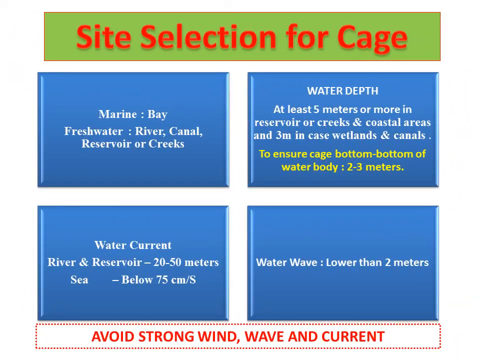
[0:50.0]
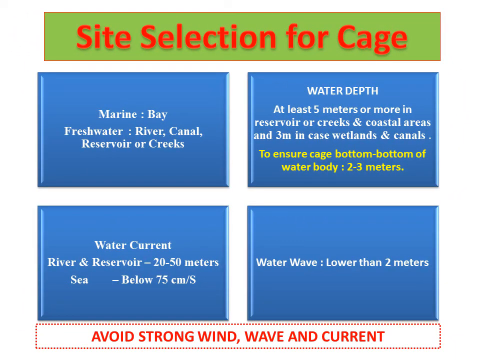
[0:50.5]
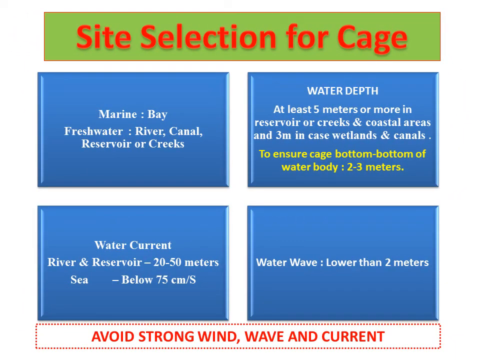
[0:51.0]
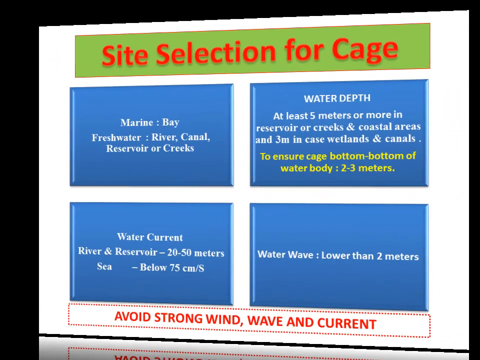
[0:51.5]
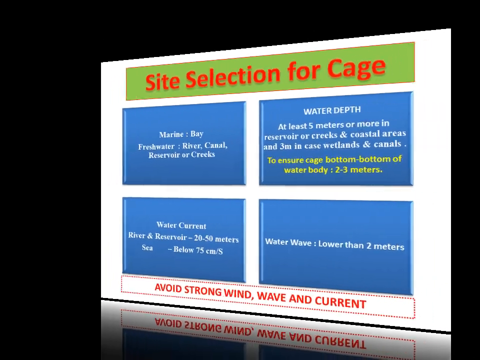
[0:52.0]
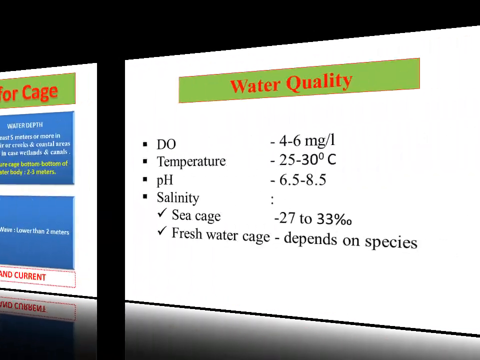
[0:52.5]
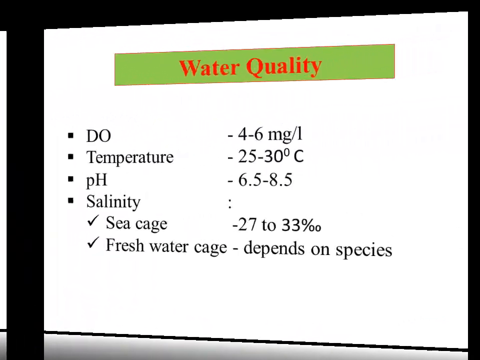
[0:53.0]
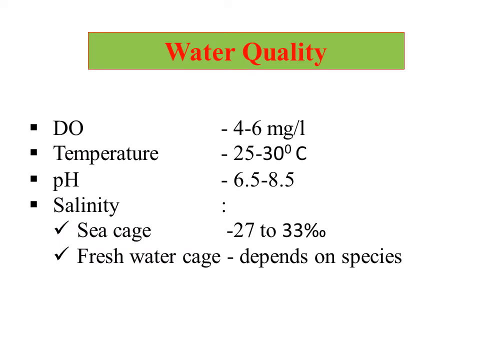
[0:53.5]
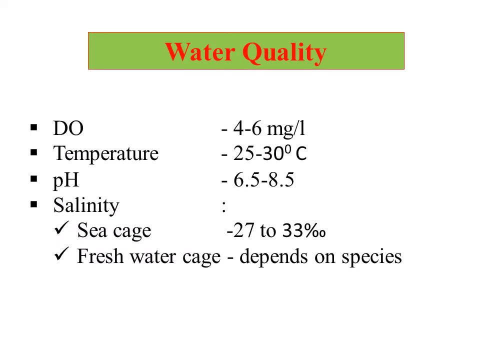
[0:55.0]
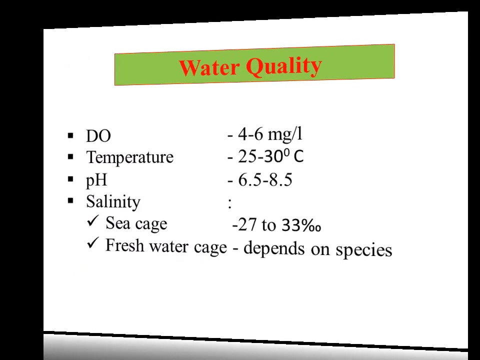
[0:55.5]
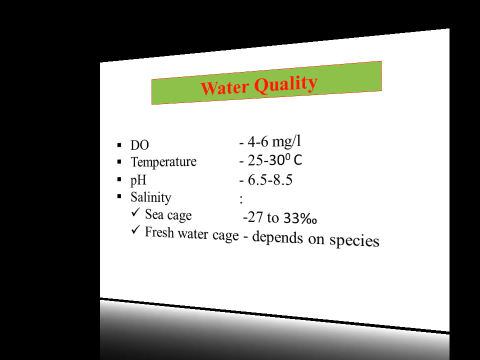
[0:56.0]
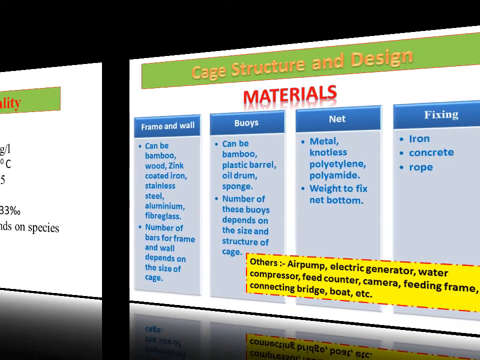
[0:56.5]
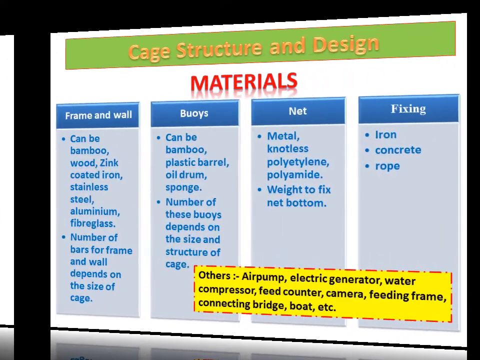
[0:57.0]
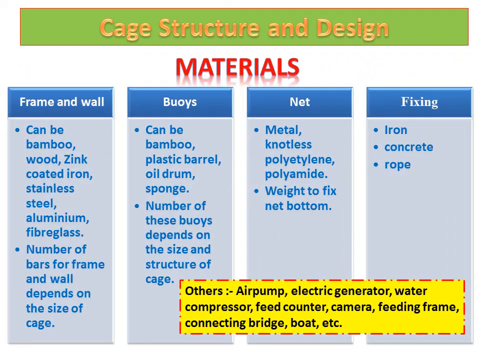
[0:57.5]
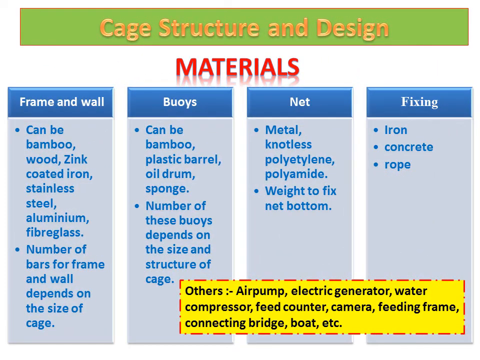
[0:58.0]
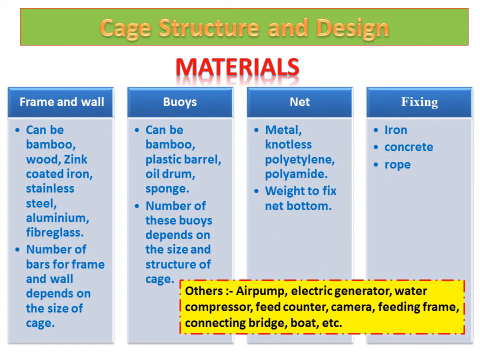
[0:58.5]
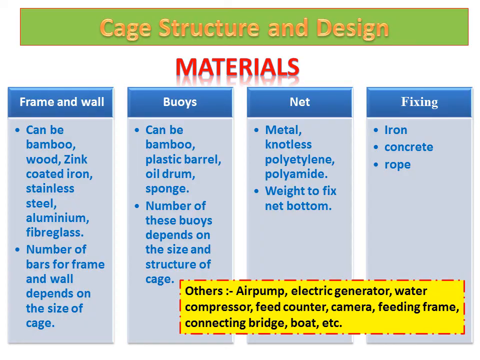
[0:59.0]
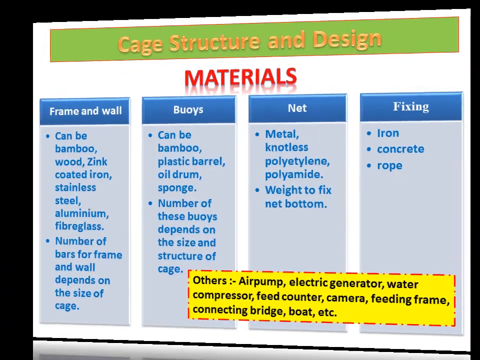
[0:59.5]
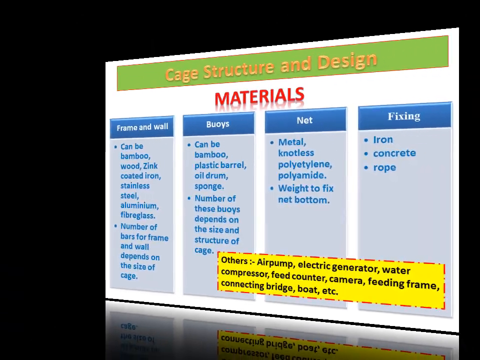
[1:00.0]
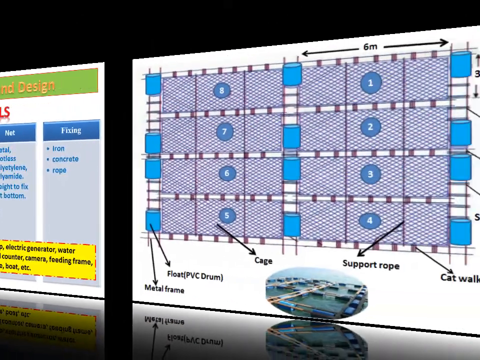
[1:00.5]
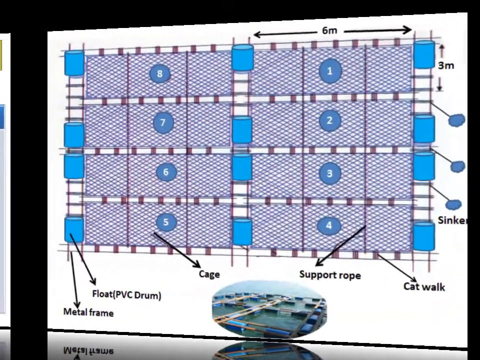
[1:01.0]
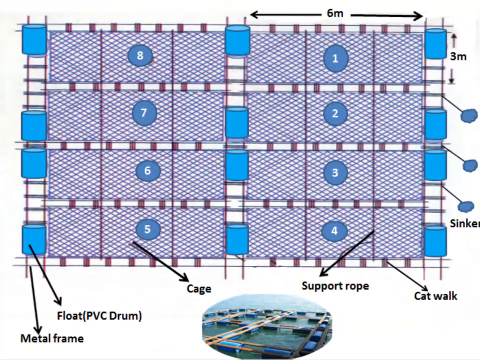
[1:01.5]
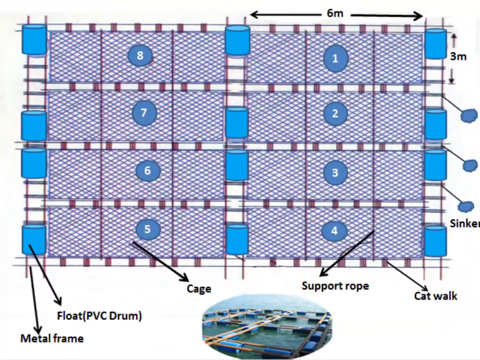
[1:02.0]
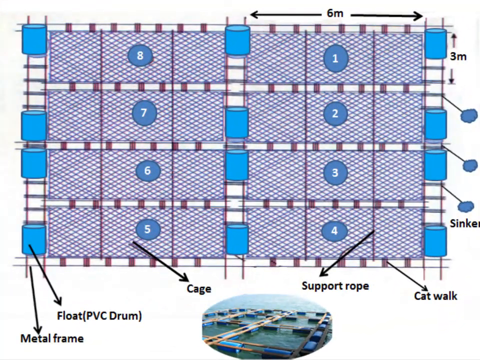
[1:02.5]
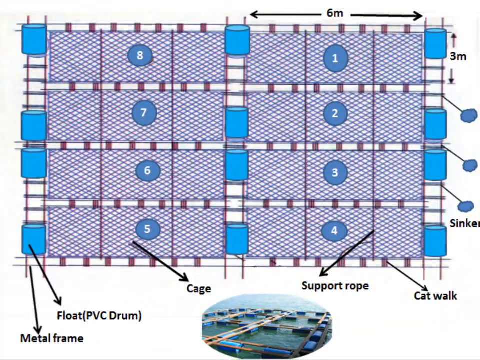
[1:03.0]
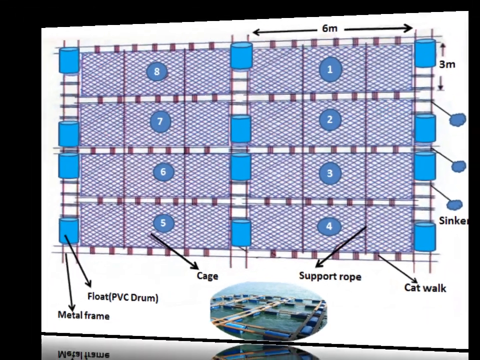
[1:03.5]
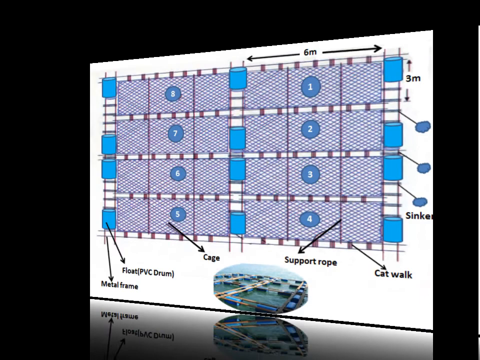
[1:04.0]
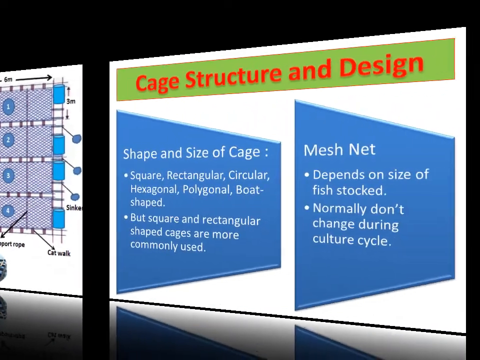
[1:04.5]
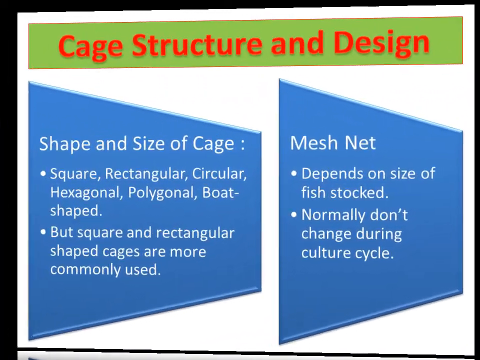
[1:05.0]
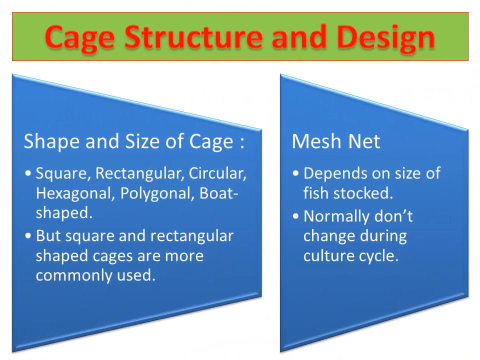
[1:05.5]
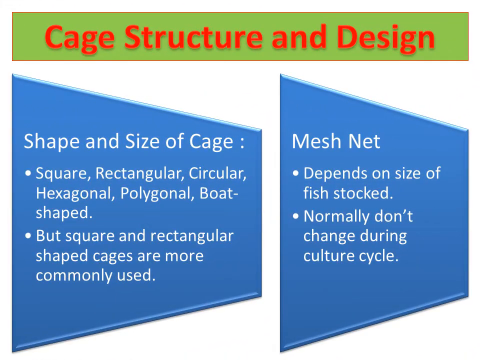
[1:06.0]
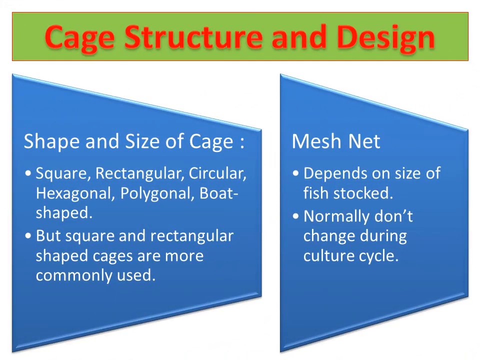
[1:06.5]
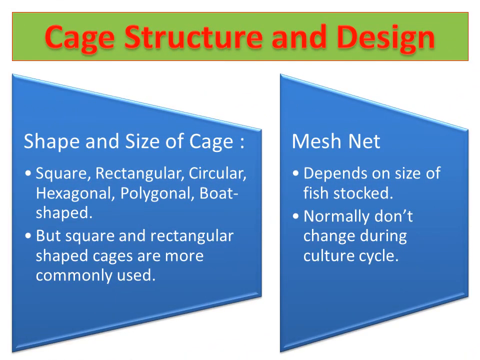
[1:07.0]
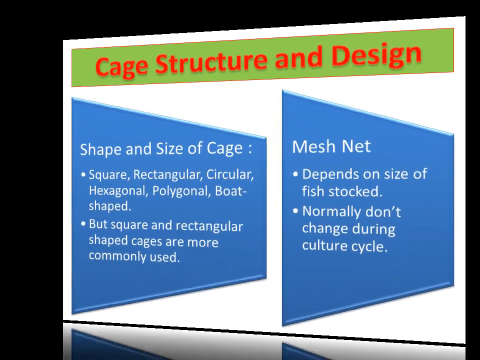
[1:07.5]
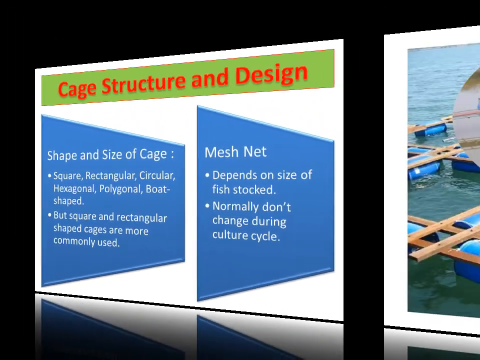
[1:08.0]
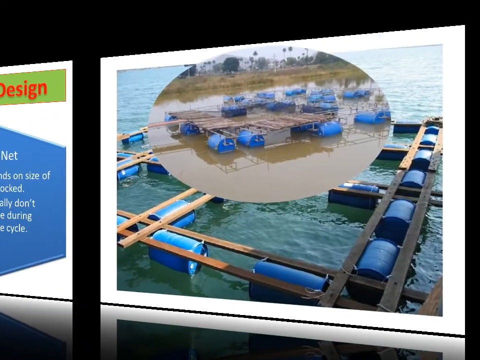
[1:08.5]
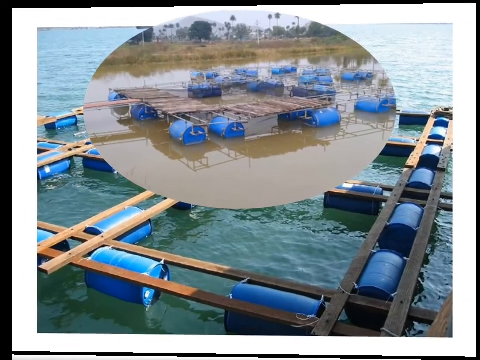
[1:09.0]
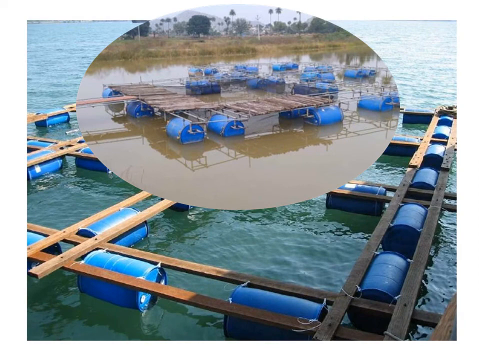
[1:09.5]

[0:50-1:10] A slide on water quality states that the temperature must be between 25 and 30 degrees Celsius and the pH between 6.5 and 8.5. The salinity must also be correct: between 27 and 33% for a sea cage, while for a freshwater cage it depends on the species of fish. The next slide covers cage structure and design, mentioning what materials should be used and equipment such as an air pump, generator or compressor. An actual image or drawing of a setup of cages follows. The following slide on cage structure and design addresses the shape and size of the cage, which can be square, rectangular, or circular, and states that the mesh net depends on the size of the fish being stocked.